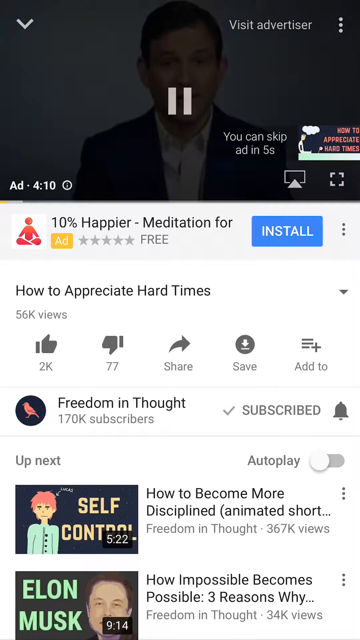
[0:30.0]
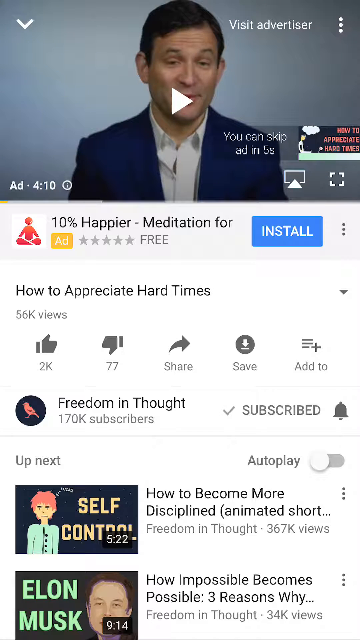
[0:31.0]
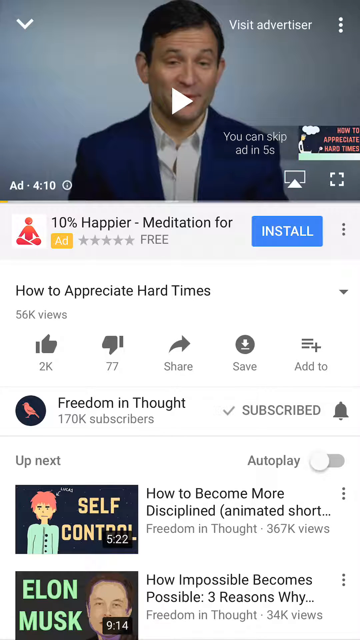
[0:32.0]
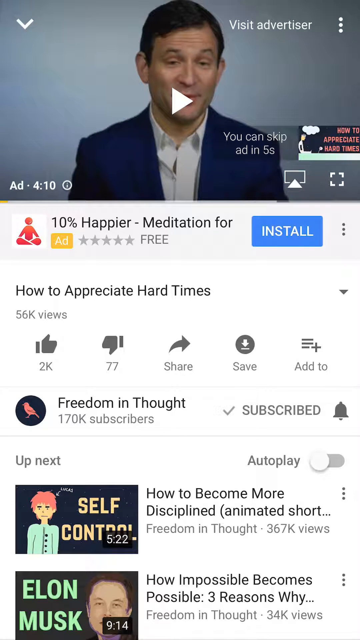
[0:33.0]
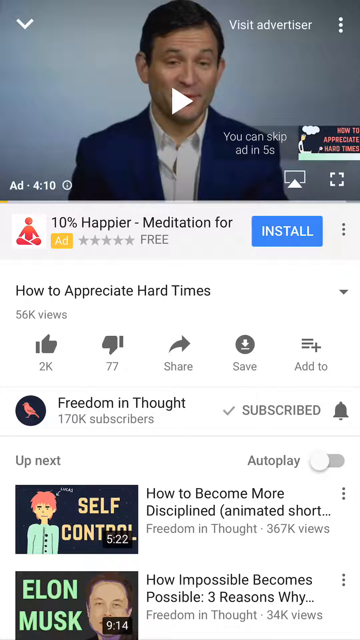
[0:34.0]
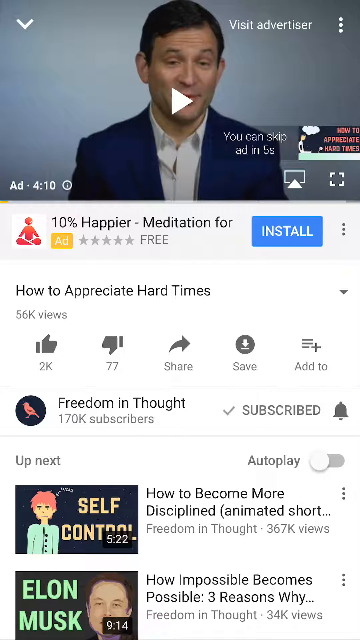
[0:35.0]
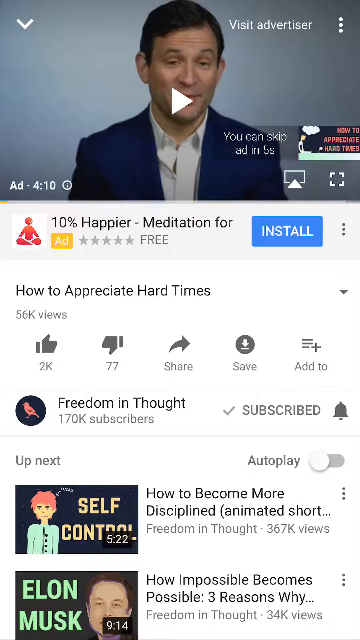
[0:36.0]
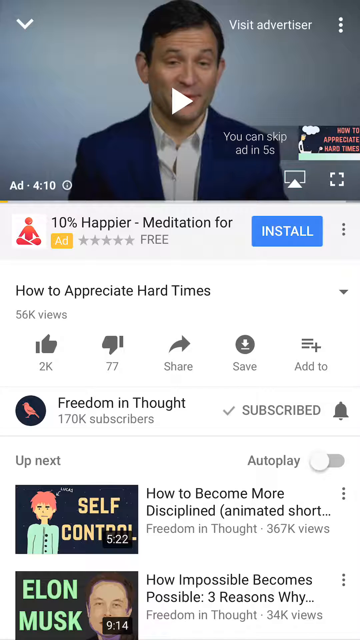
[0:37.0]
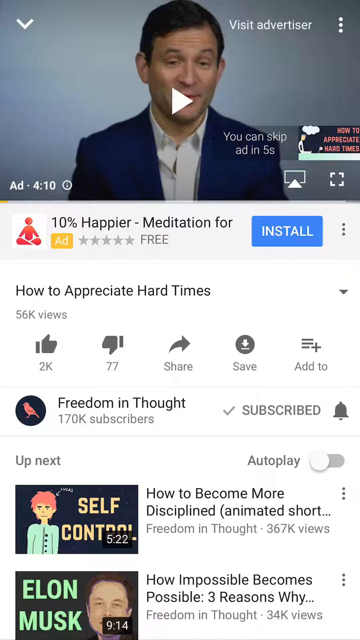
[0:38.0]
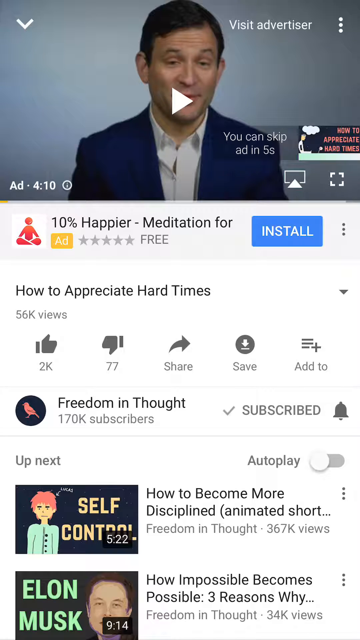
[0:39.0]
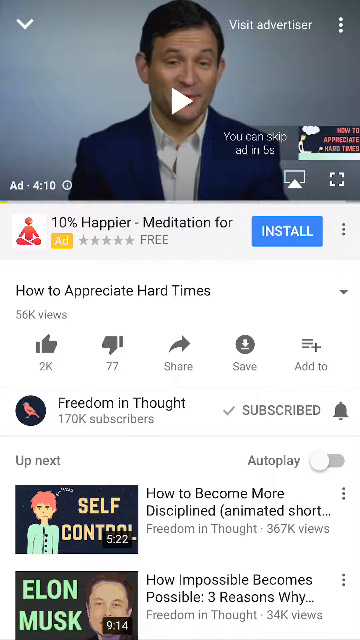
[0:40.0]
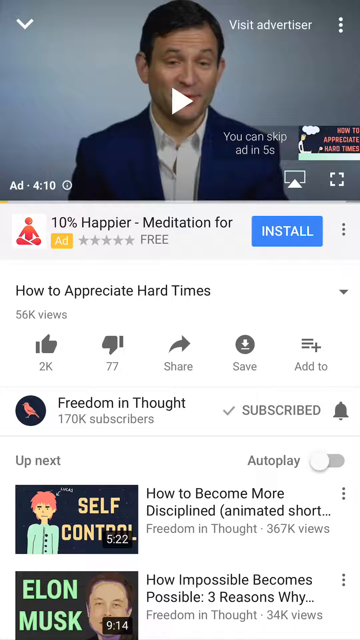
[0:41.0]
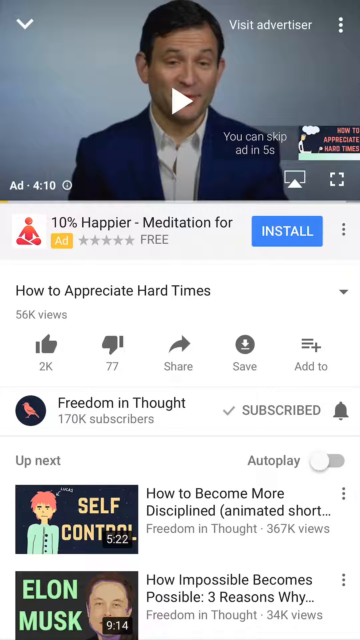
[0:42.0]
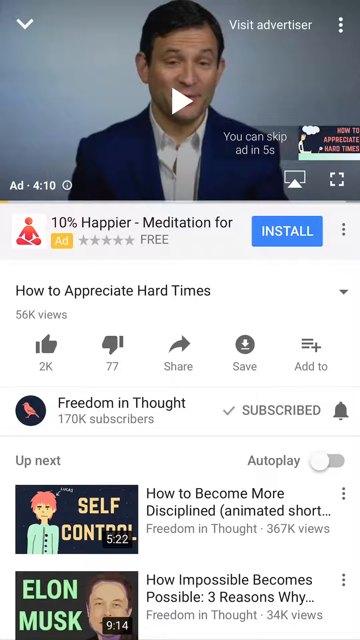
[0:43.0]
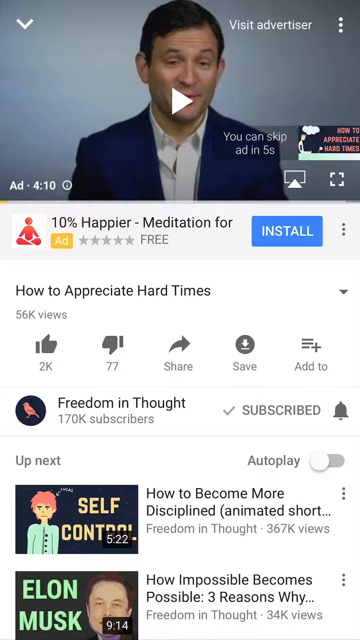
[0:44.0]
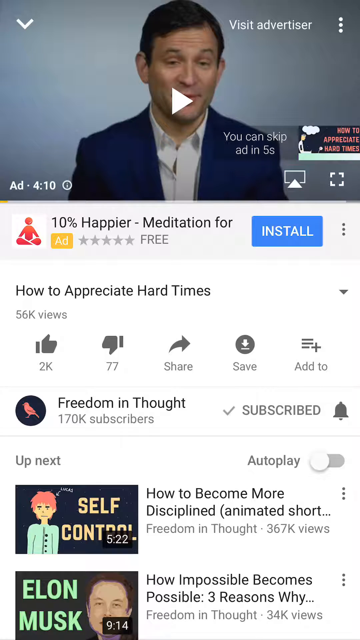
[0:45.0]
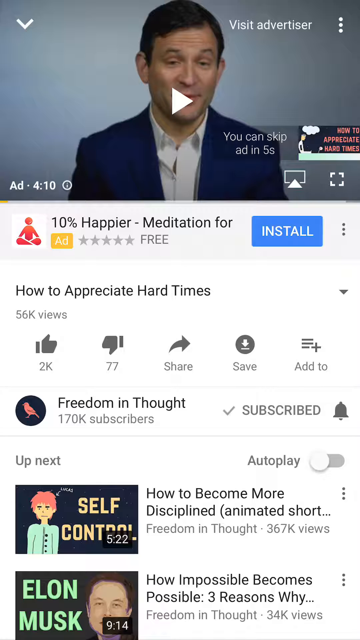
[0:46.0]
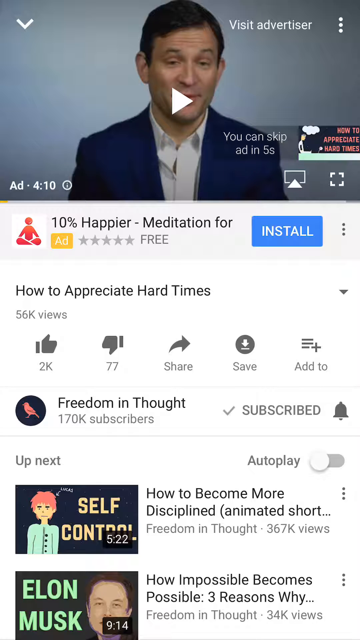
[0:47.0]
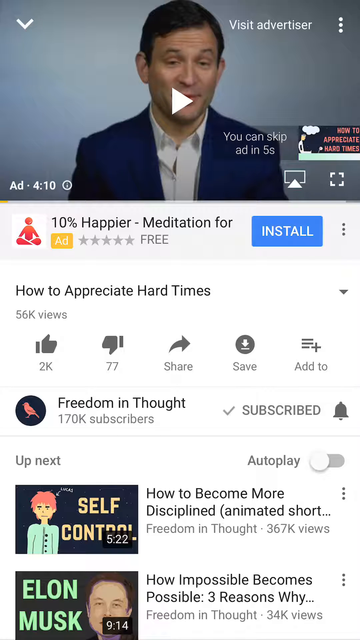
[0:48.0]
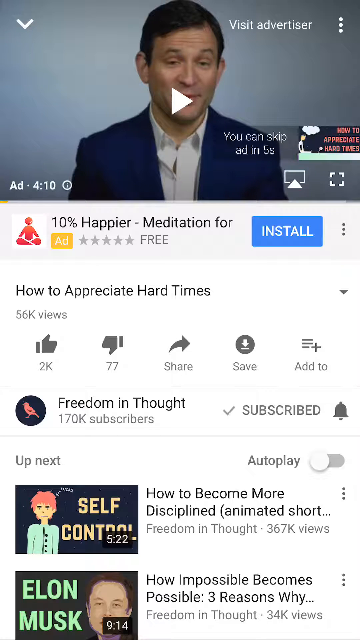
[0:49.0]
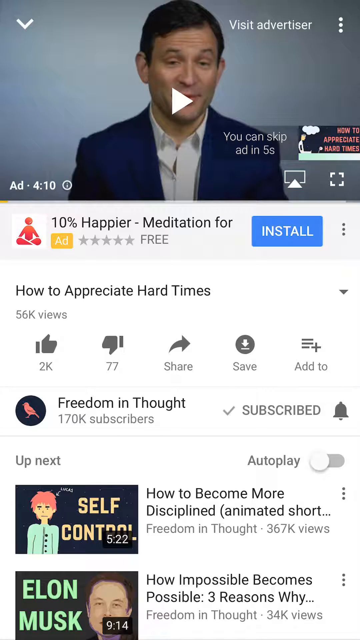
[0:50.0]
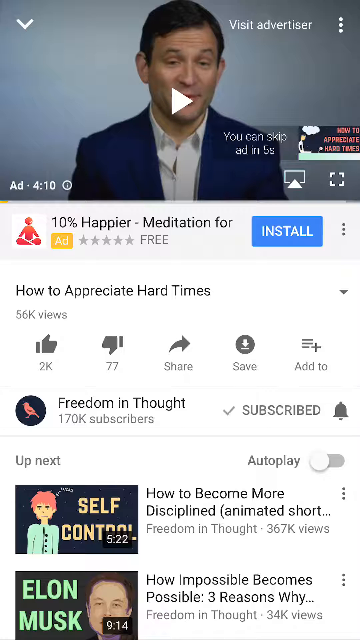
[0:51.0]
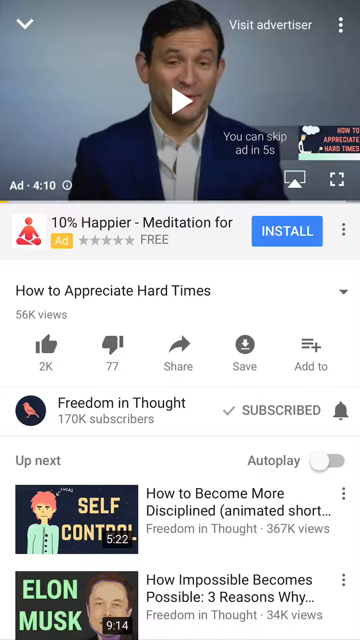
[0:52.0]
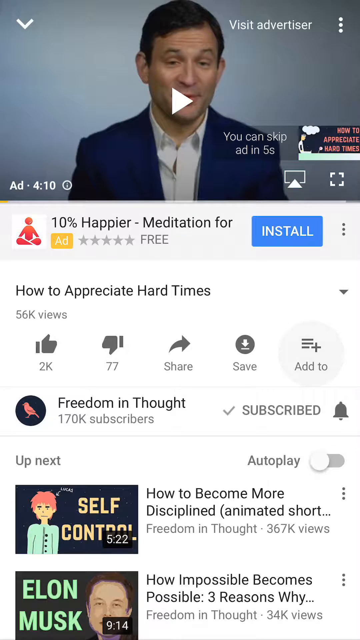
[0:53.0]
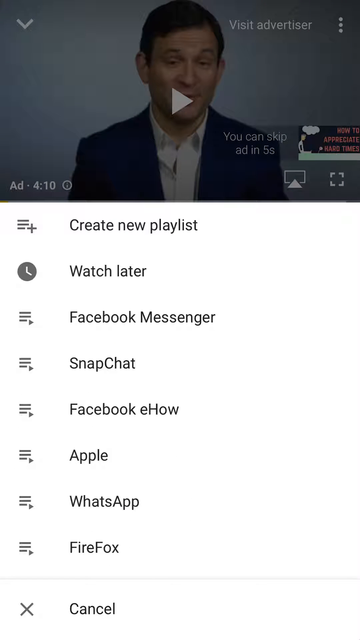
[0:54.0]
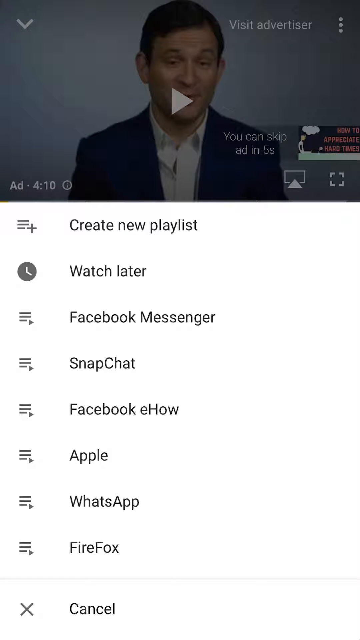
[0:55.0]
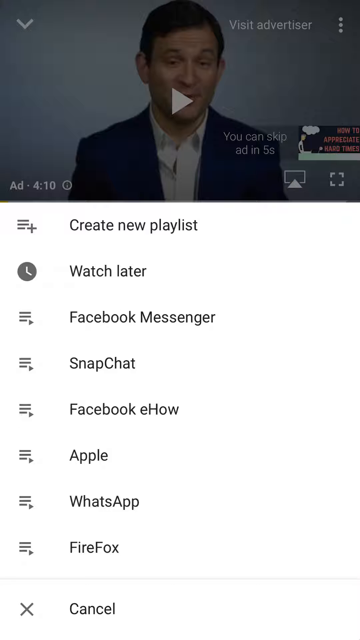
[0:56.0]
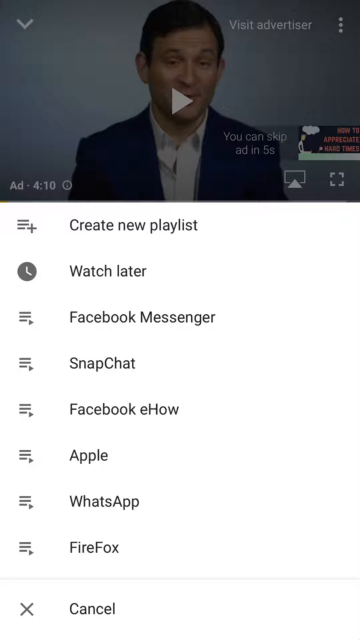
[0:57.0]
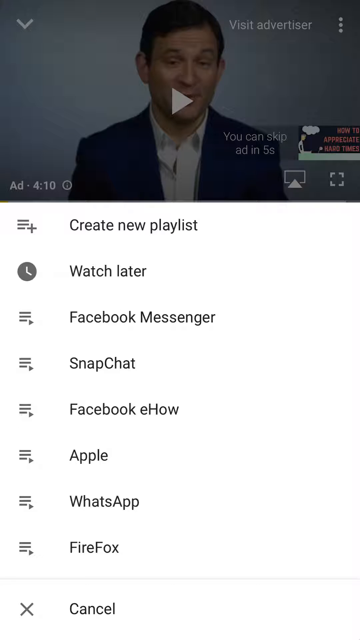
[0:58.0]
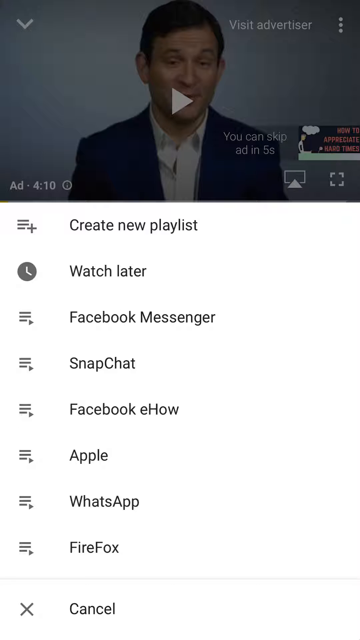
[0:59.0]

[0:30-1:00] The YouTube app is open to a video titled "How to Appreciate Hard Times", posted by the channel "Freedom in Thought", which has 170,000 subscribers. An ad shows before the video, featuring a man in a blue blazer speaking, with a skip button that counts down until the ad can be skipped. Underneath the video is a list of recommended and up-next videos, with an autoplay toggle that is toggled off. The ad seems to be paused, with a white play button over it. A pop-up menu then comes up from the bottom of the screen with options such as "create new playlist", "watch later", "Facebook Messenger", "Snapchat", "Facebook eHow", "Apple", "WhatsApp", "Firefox" and "cancel".